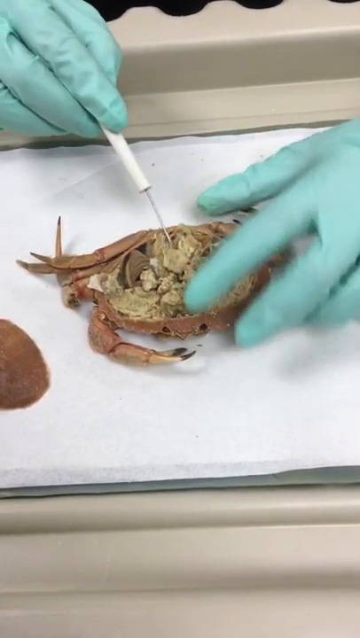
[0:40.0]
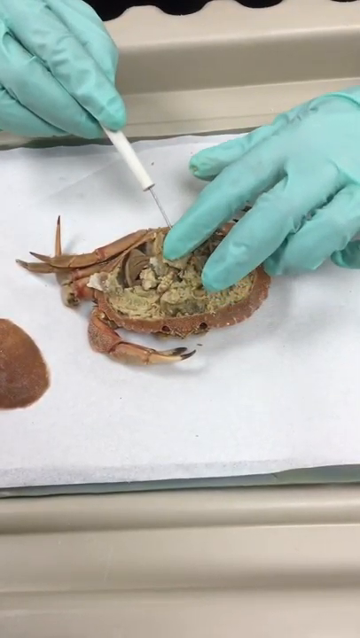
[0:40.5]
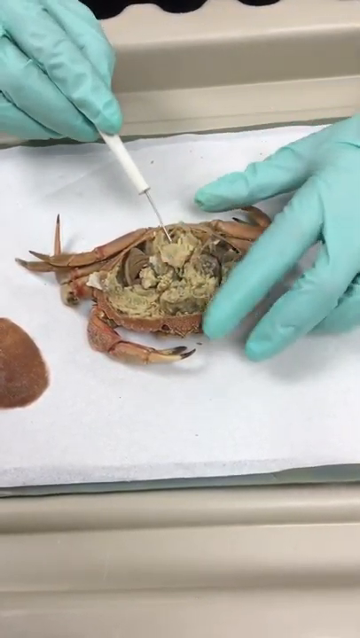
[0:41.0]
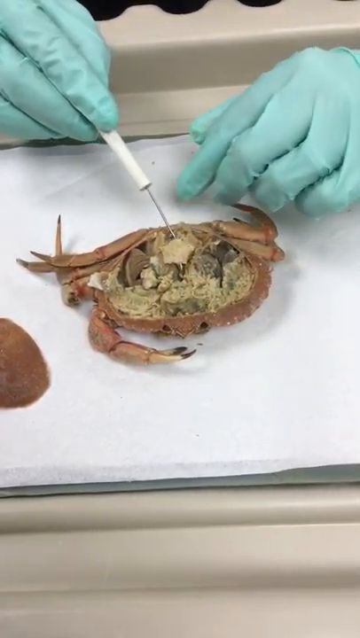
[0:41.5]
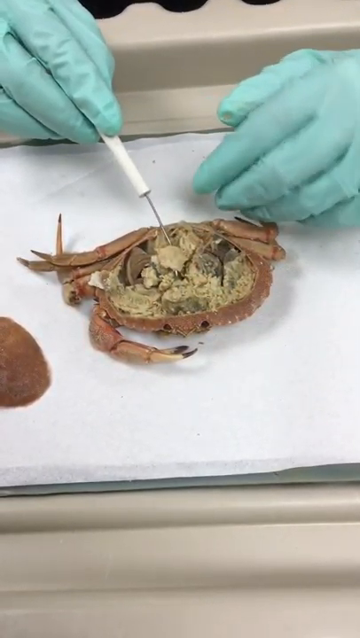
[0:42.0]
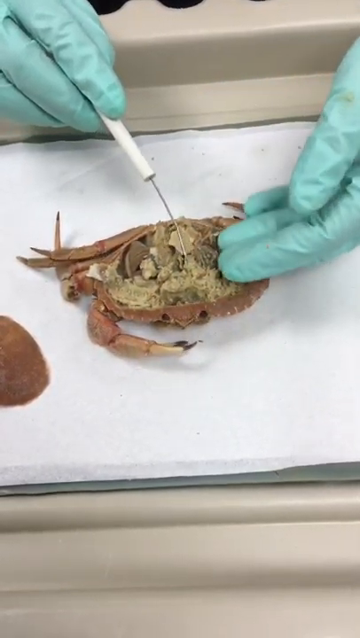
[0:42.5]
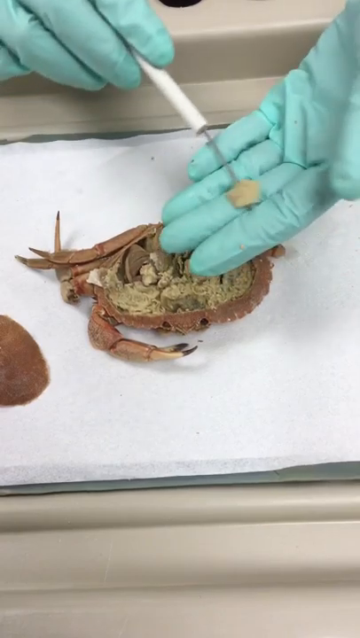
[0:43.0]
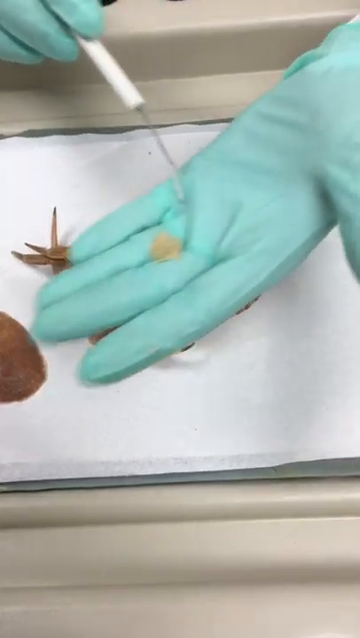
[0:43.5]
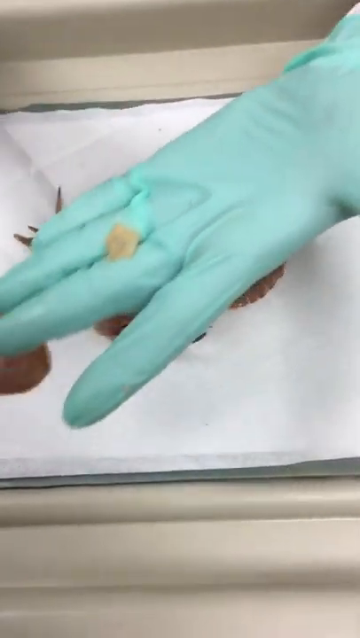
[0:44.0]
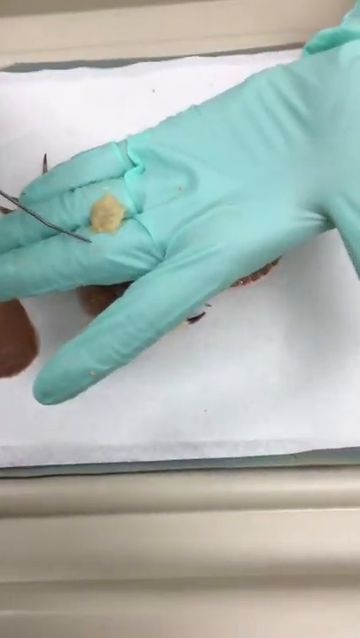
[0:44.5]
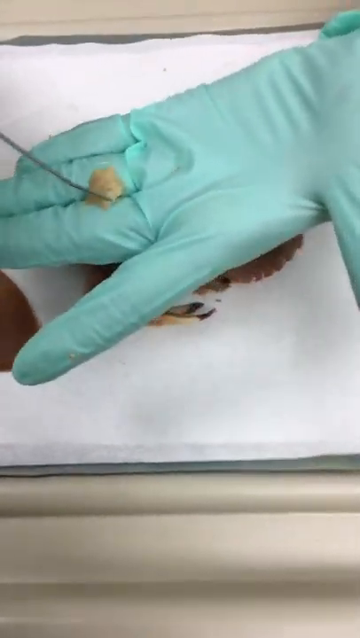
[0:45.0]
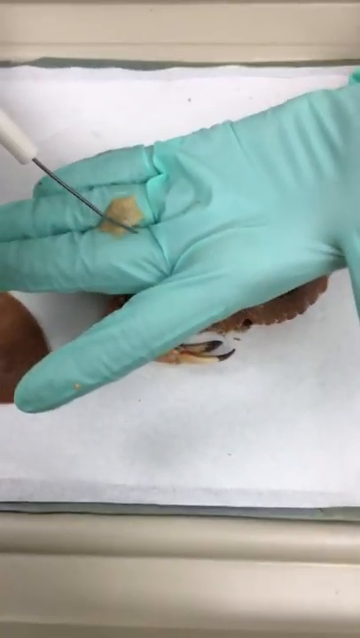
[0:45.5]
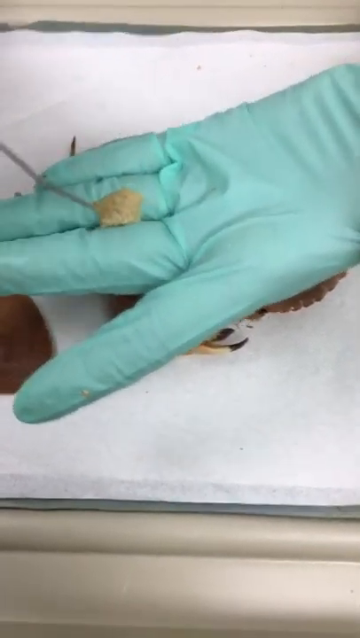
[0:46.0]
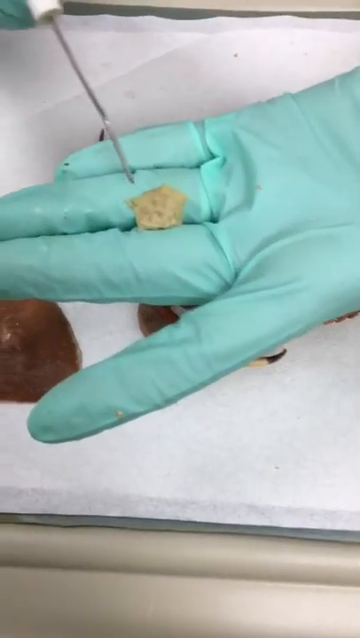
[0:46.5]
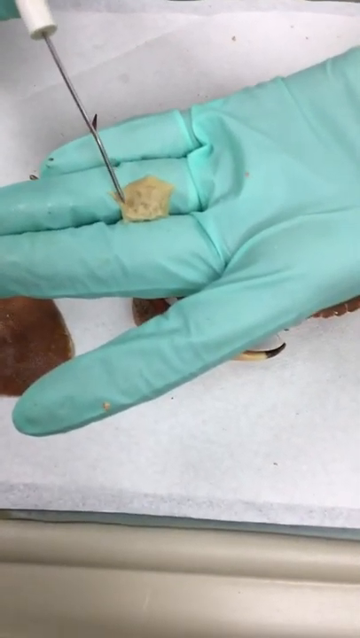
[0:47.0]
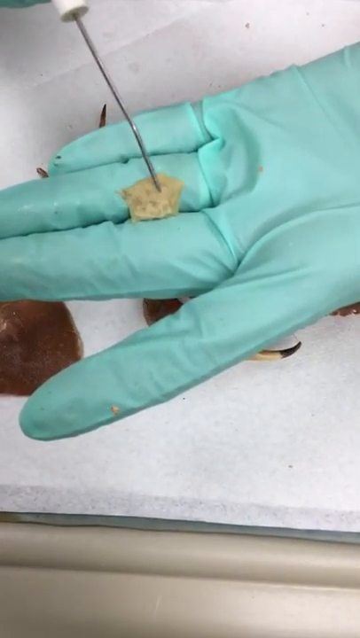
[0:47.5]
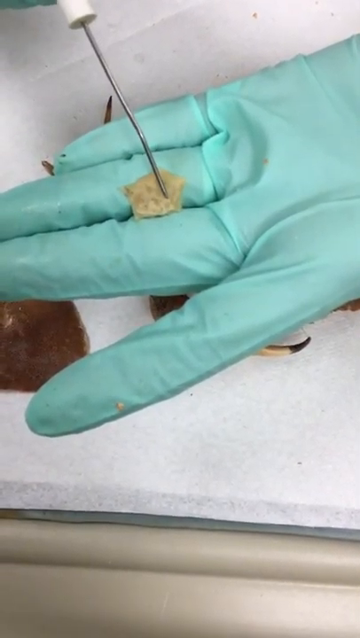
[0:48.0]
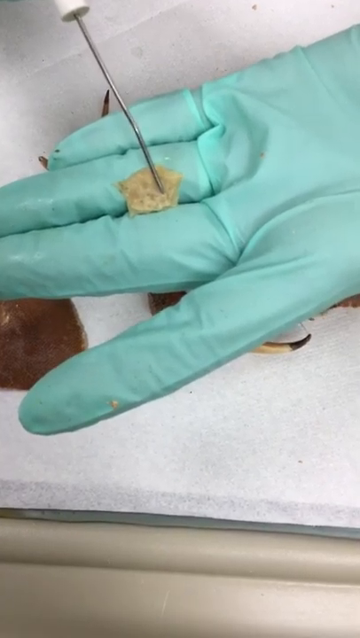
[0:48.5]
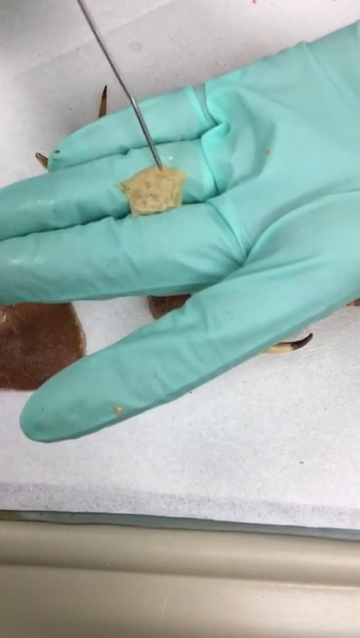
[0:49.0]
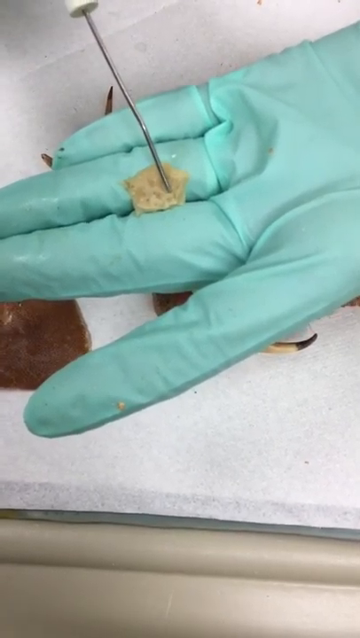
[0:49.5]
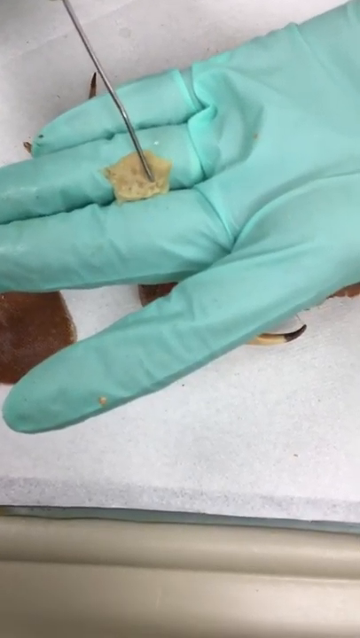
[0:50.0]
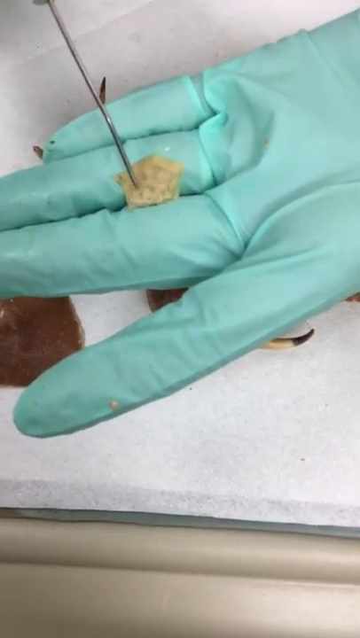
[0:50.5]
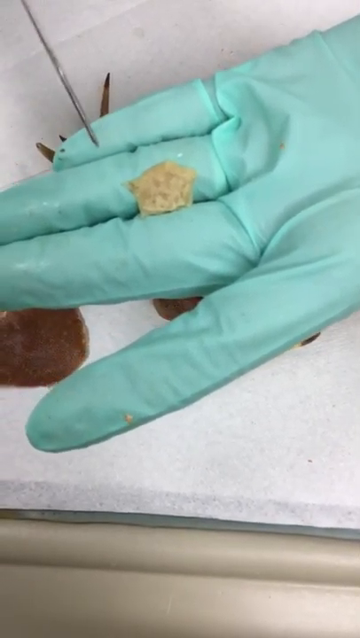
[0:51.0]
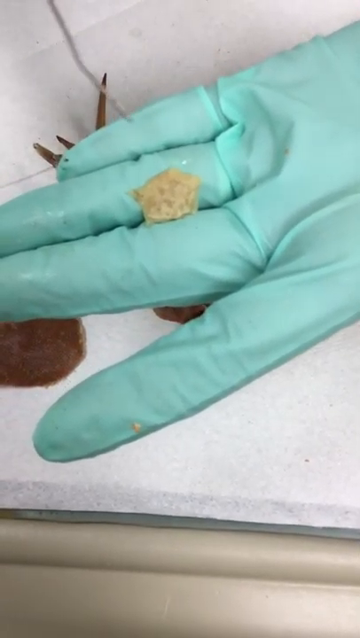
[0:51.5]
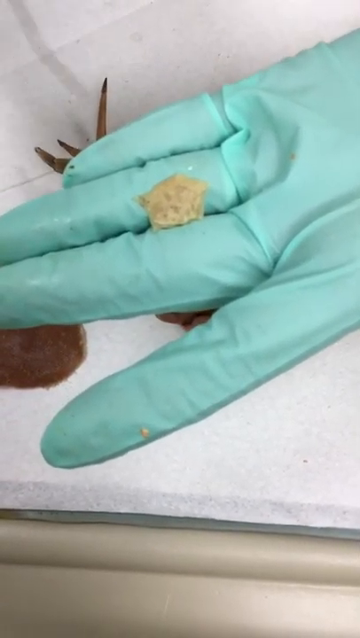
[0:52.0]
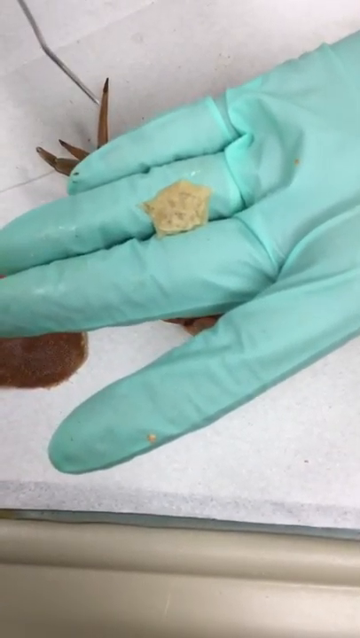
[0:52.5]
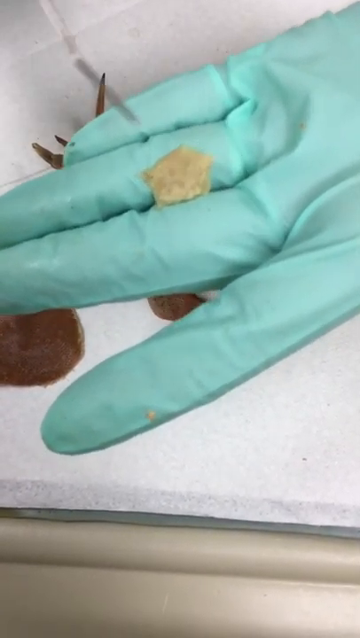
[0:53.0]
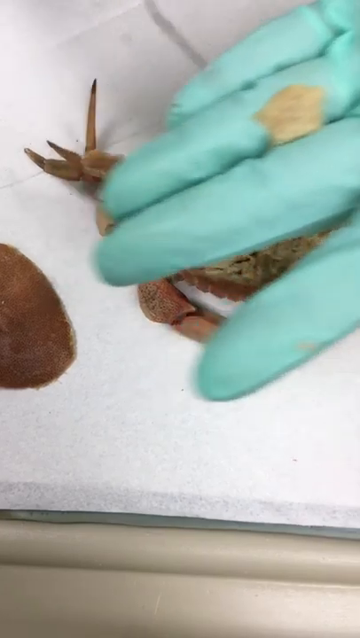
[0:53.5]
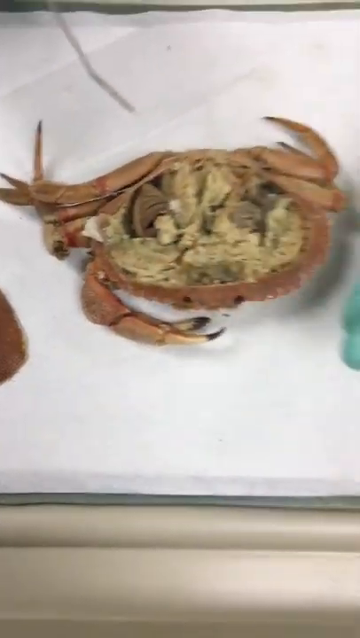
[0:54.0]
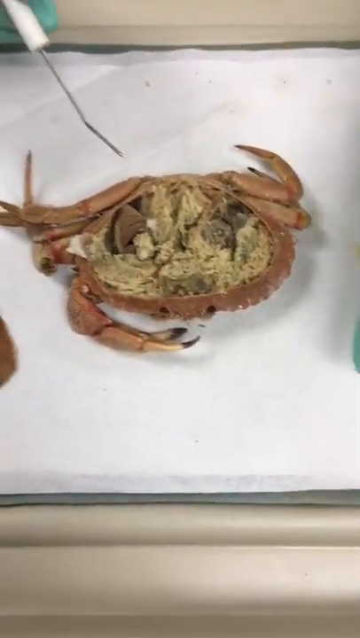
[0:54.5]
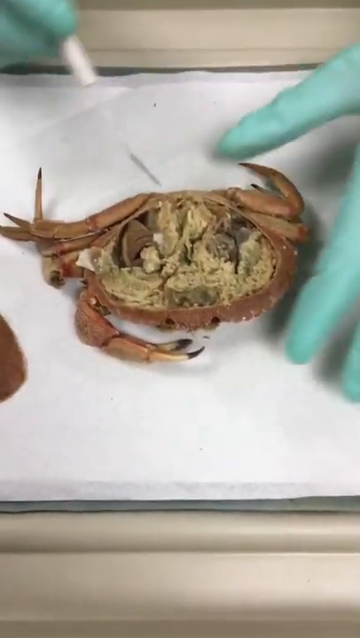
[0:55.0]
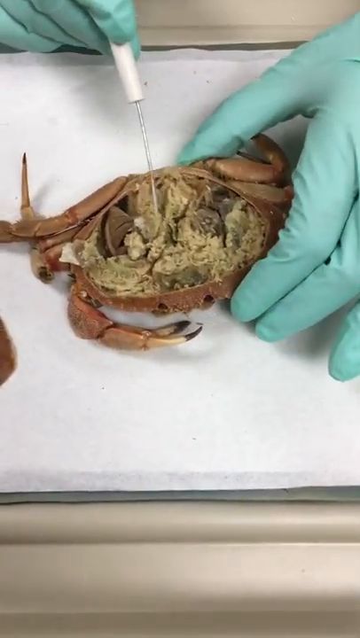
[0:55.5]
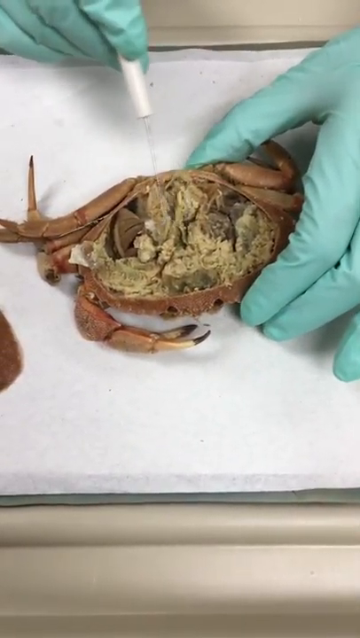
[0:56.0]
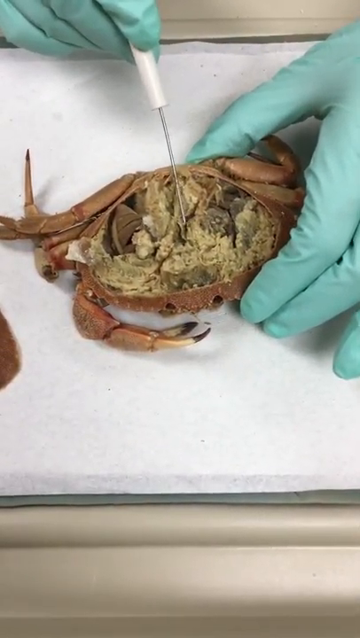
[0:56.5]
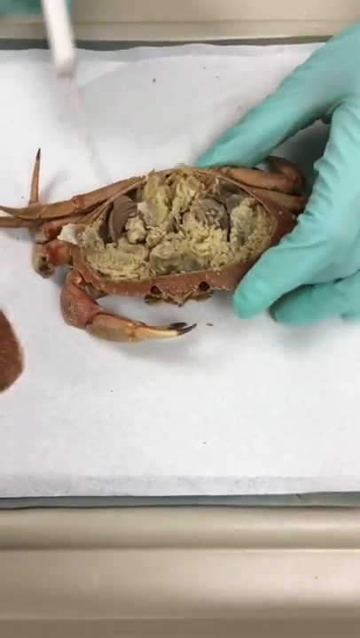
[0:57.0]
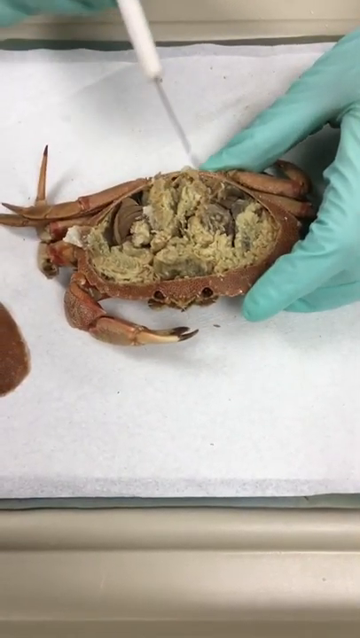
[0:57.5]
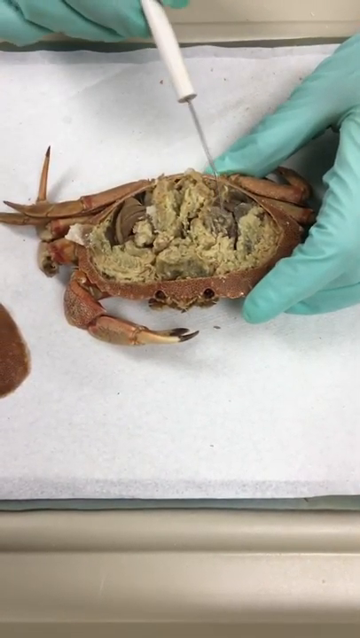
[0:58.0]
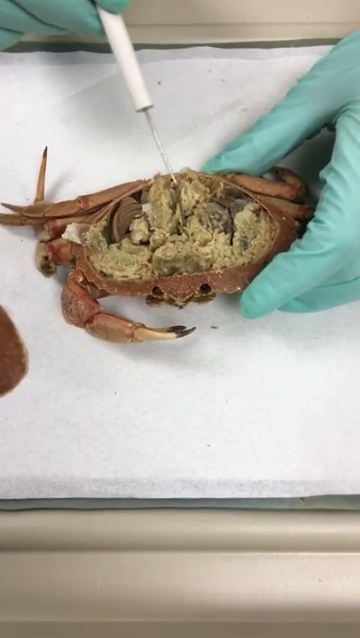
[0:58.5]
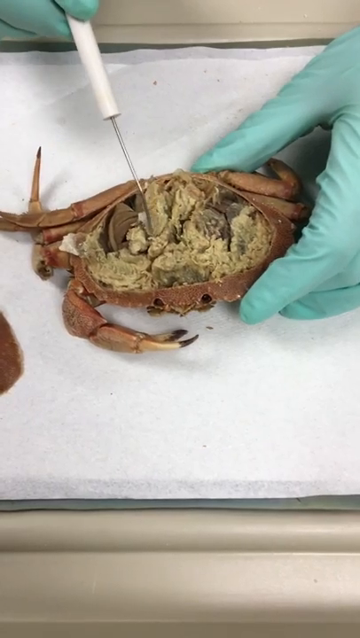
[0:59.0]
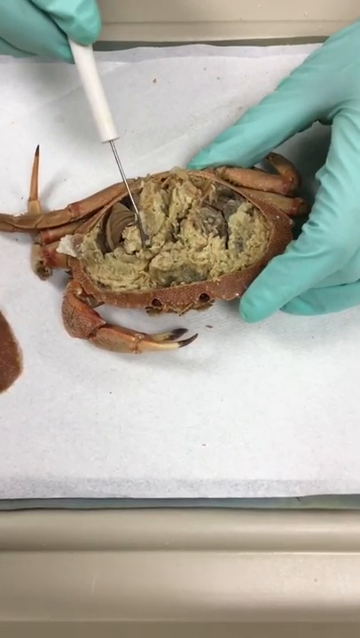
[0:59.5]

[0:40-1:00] Hands in light teal gloves dissect a little red crab sitting on absorbent white paper. The right hand holds an instrument, a metal needle-like stick with a plastic straw-like handle, that pulls pieces out of the top of the crab's back and puts them into the left hand, which then displays the piece pulled out. The crab's right claw protrudes out in front of it and its eyes are visible. The top of its carapace has been surgically removed and is sitting to its right. The crab's legs are tucked underneath in the back. The dissector's right hand pokes around in the open tissue, pulls out a piece and places it on the left gloved hand to show the viewer, then prods around the piece of tissue to show its sponginess.